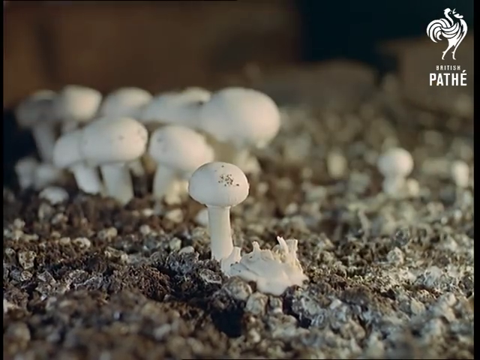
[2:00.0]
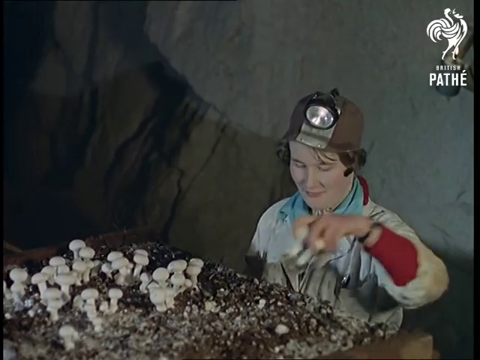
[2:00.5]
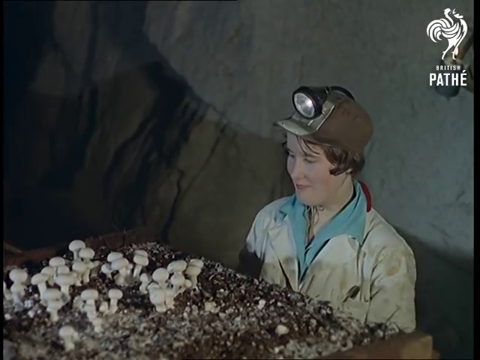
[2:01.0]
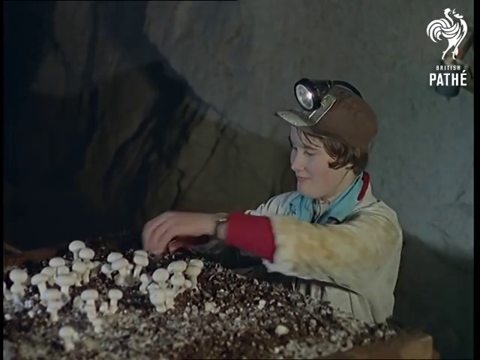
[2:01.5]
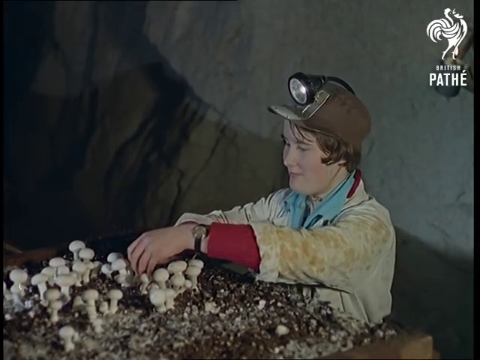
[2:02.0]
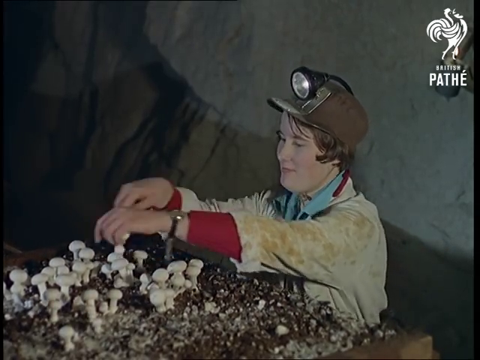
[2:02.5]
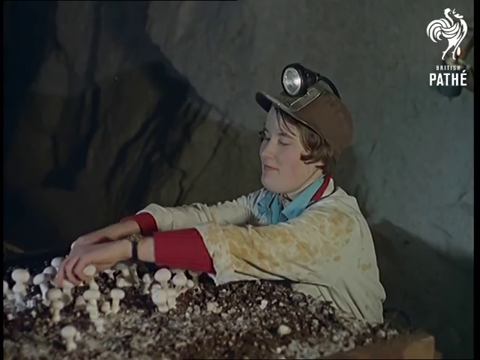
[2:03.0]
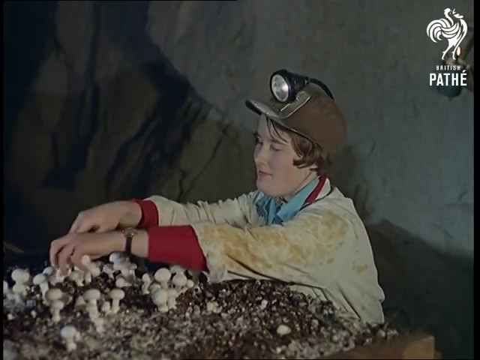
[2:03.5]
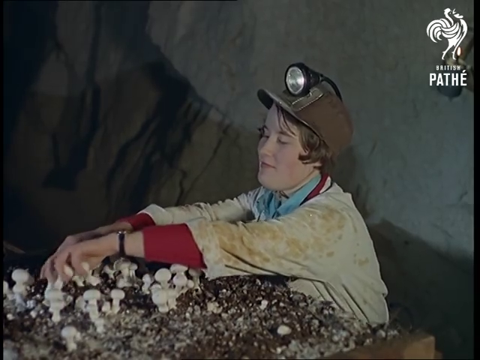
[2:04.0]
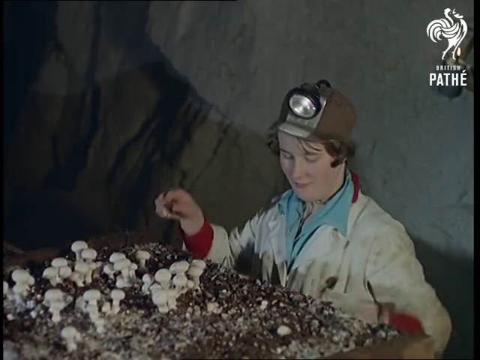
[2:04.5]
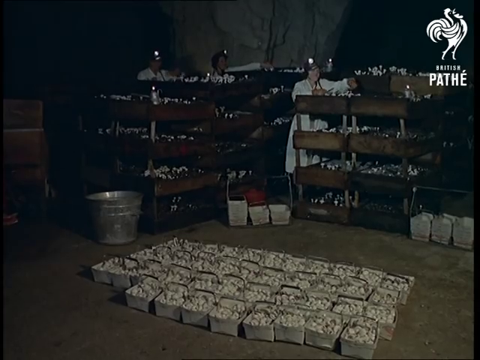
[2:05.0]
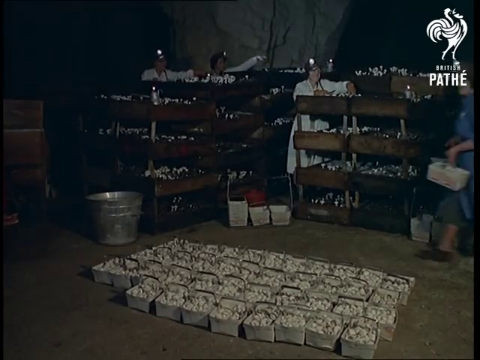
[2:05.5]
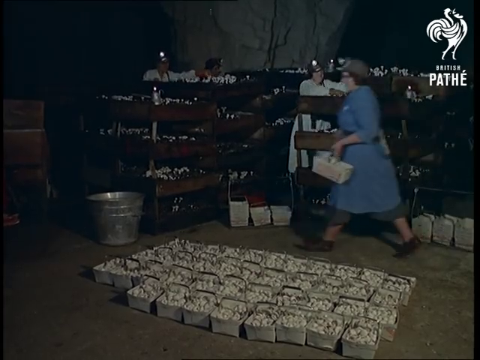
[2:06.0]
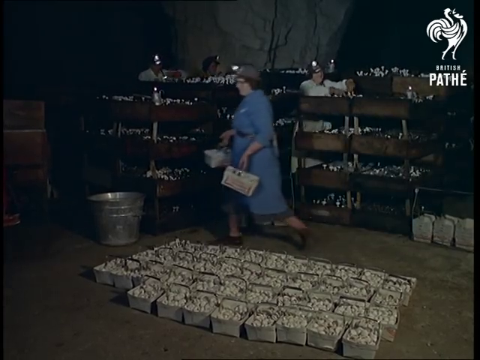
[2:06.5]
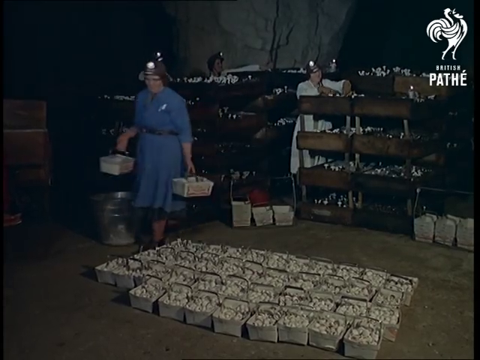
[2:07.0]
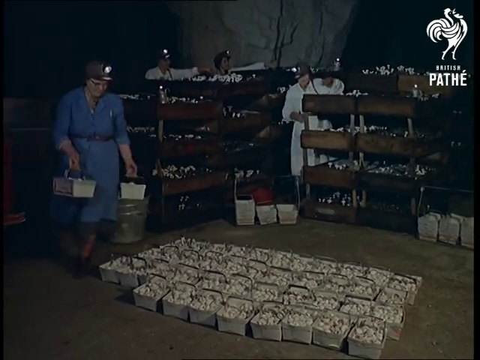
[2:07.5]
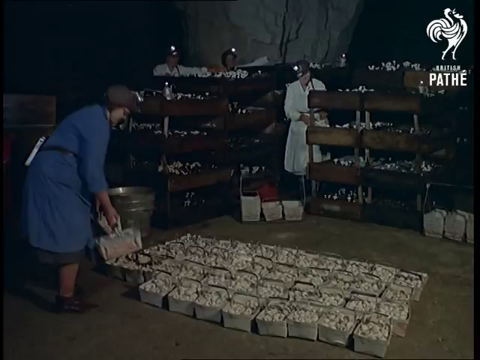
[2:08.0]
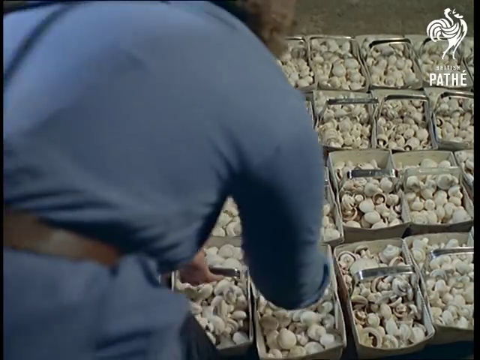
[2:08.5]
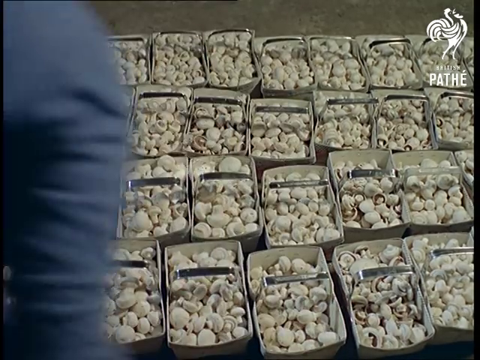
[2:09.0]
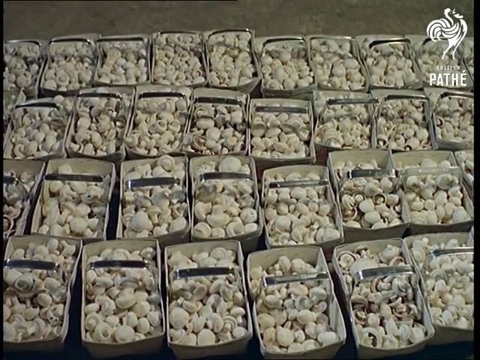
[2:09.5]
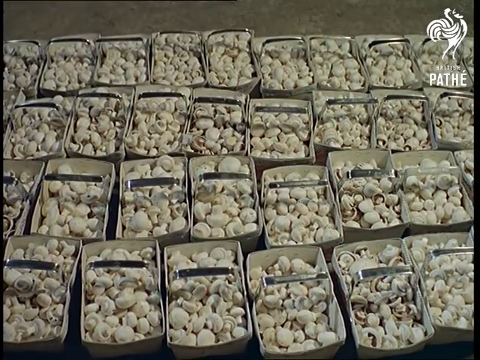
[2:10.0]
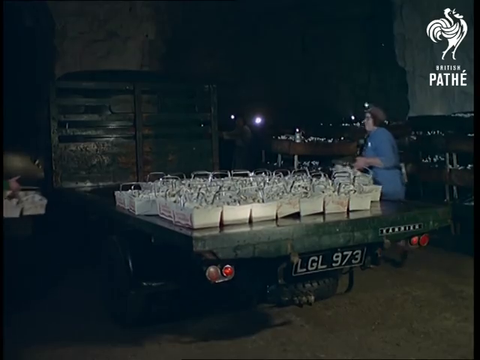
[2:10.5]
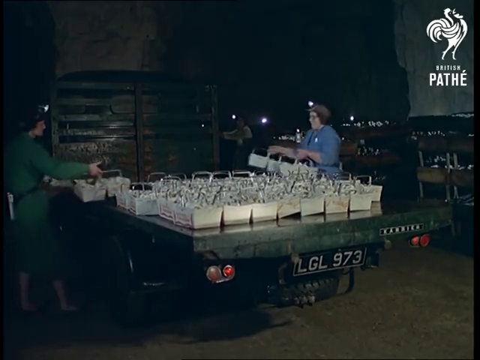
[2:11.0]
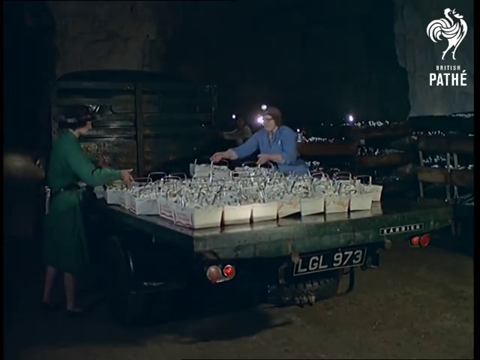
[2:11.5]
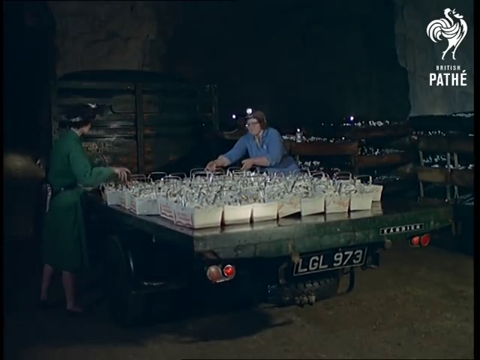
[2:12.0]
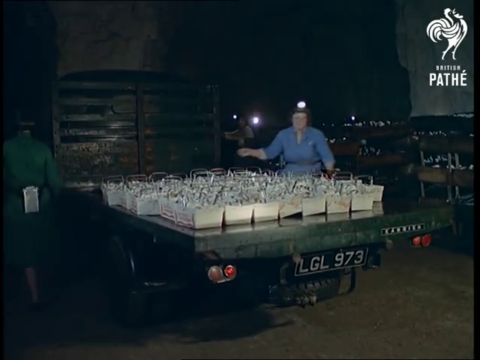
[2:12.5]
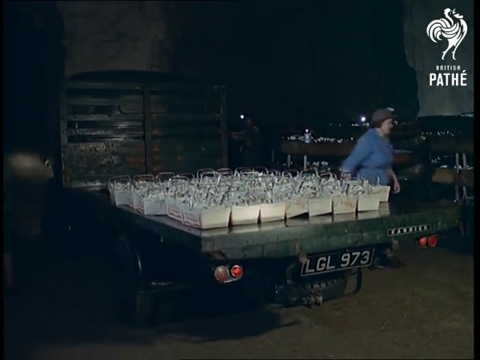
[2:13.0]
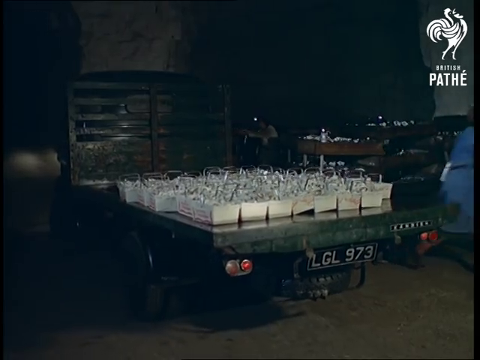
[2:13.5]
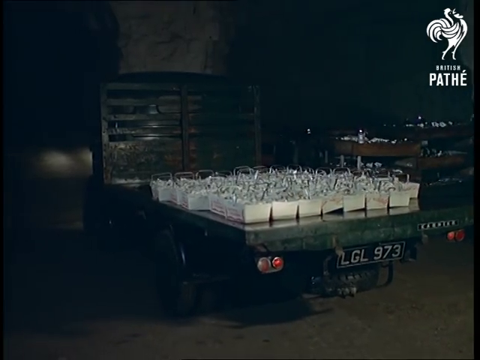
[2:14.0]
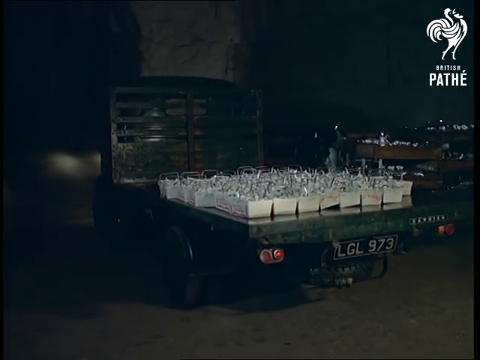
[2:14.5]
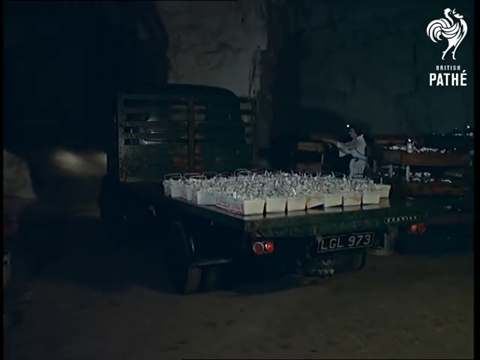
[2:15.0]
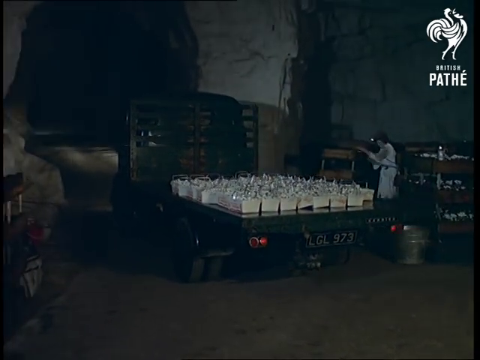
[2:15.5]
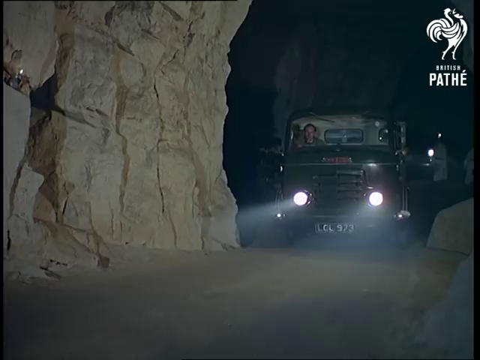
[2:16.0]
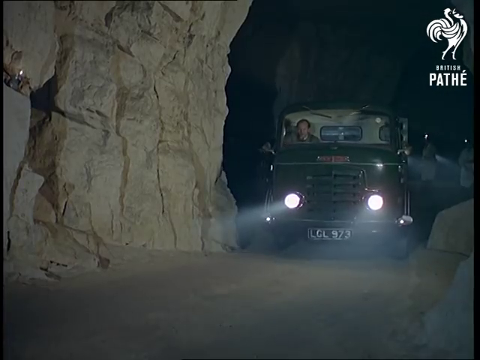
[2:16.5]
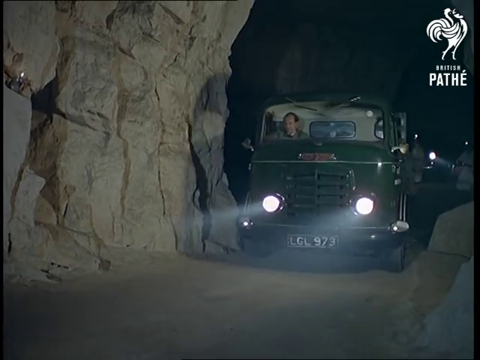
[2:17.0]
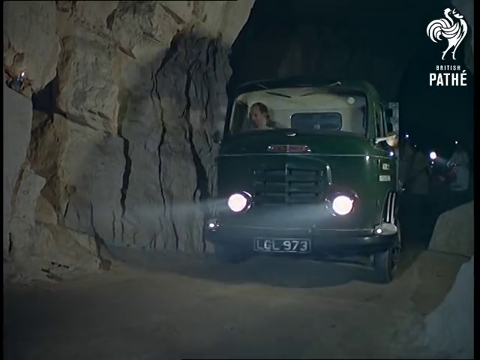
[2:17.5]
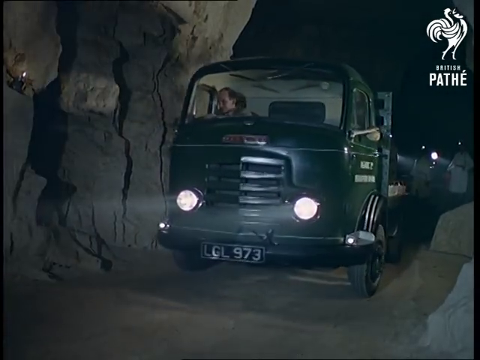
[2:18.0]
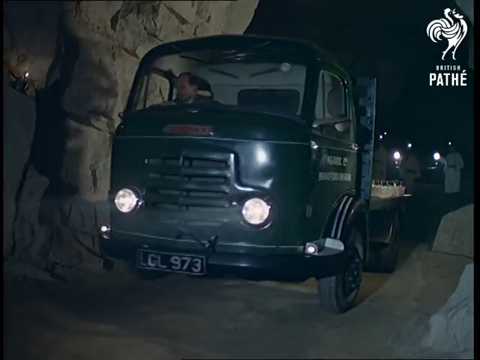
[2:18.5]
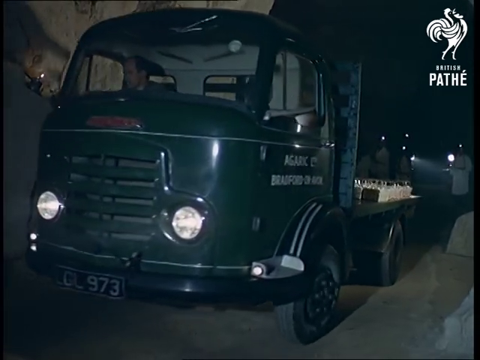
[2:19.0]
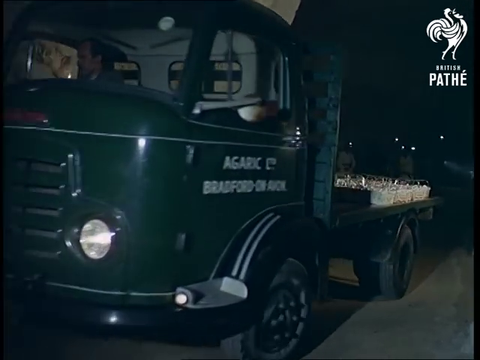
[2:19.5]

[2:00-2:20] Back inside the tunnel, the women finish their day, continuing to cut the mushrooms and package them in little white baskets with handles, still wearing the lights on their heads. They load the baskets onto the bed of an old green truck, which drives out of the tunnel, and it is dark when they come outside. The women are smiling. A shot of the mushrooms follows, which are very white and look firm.